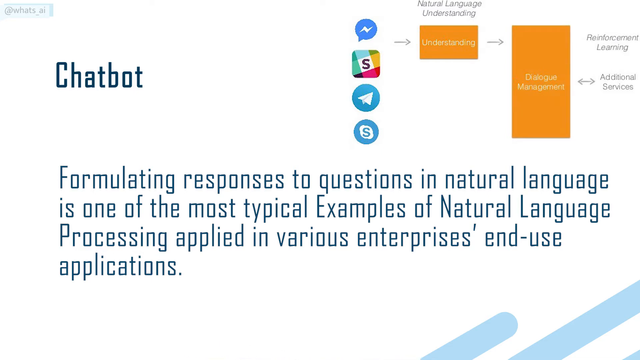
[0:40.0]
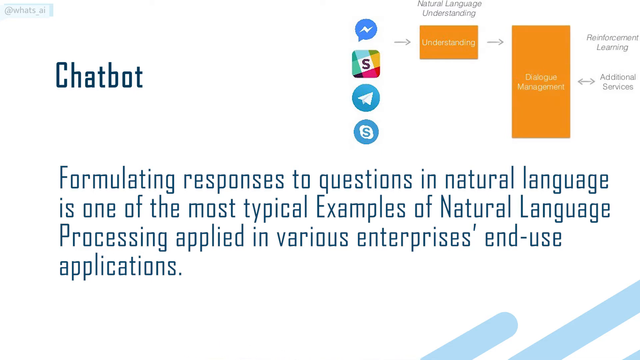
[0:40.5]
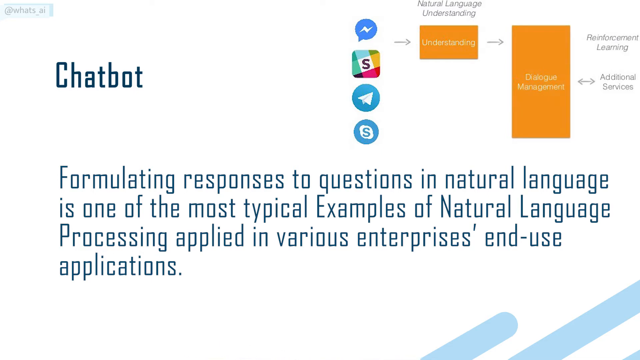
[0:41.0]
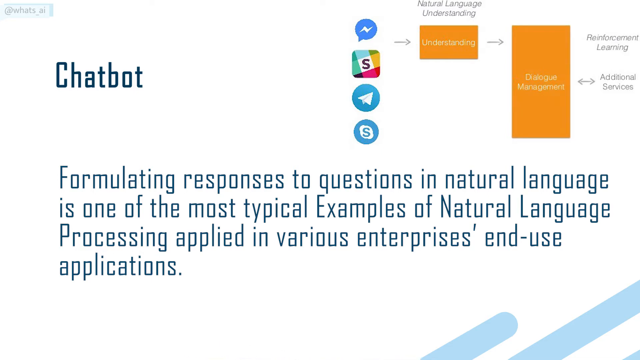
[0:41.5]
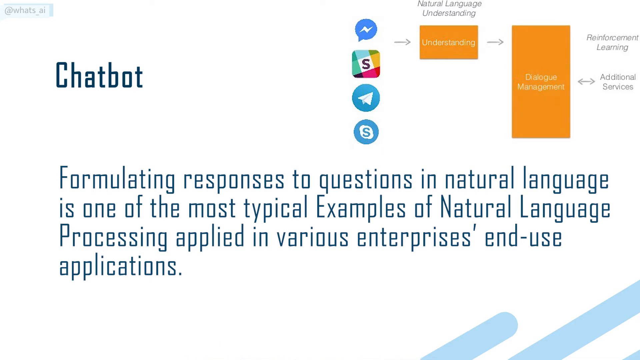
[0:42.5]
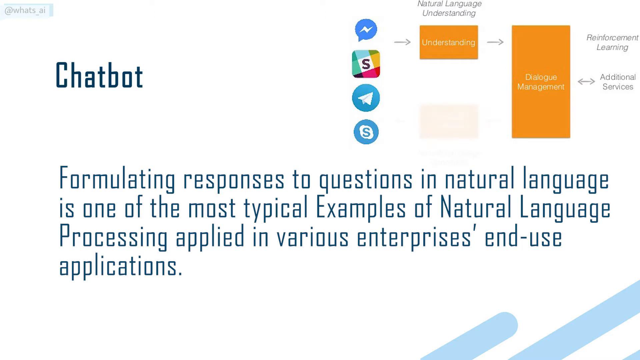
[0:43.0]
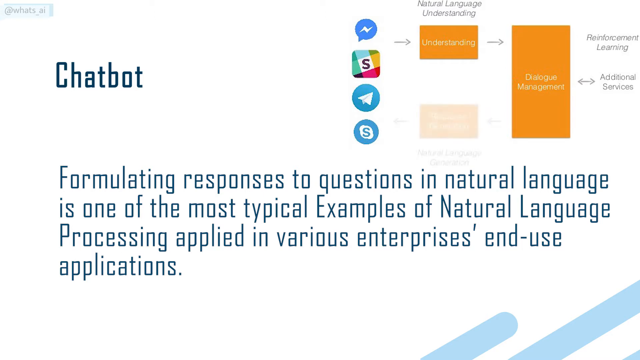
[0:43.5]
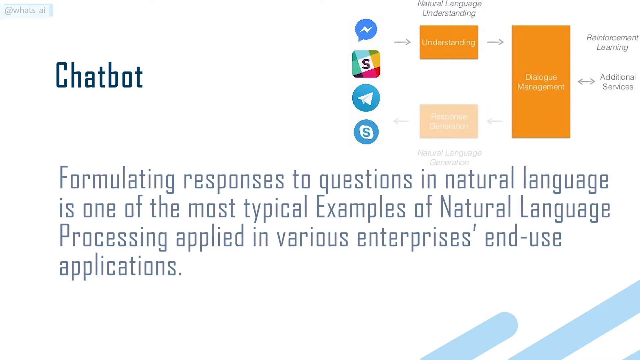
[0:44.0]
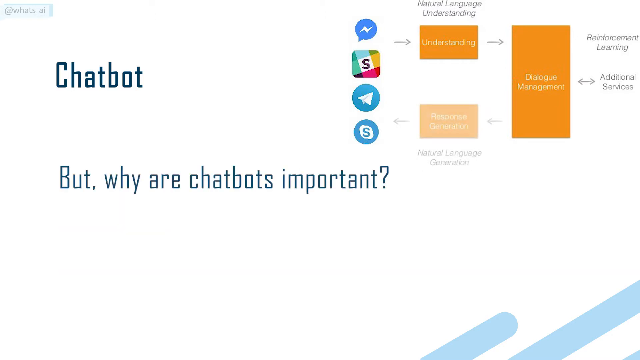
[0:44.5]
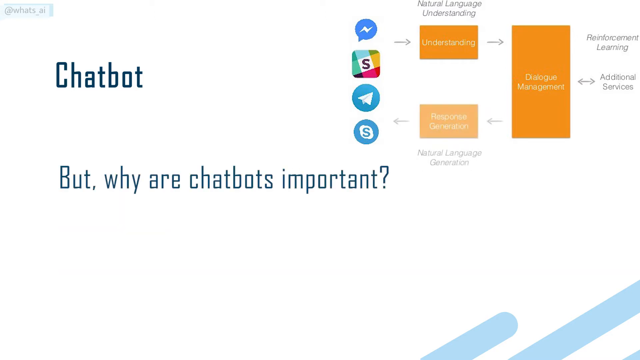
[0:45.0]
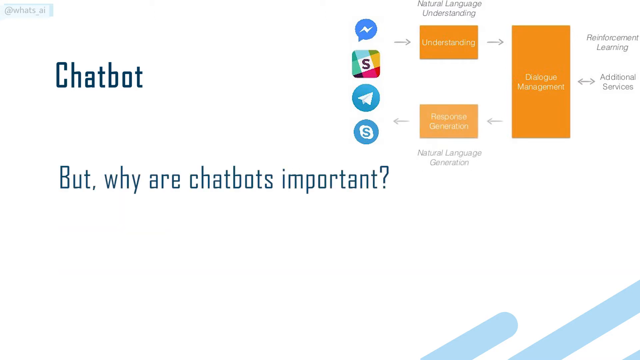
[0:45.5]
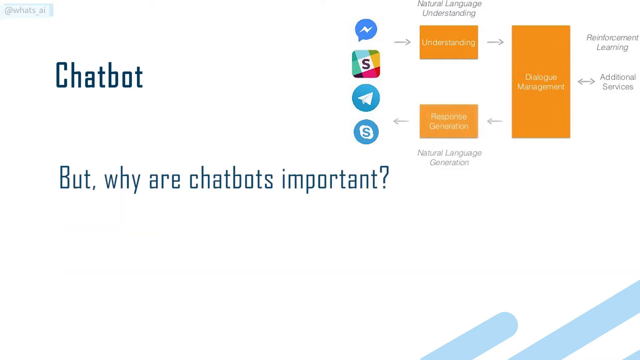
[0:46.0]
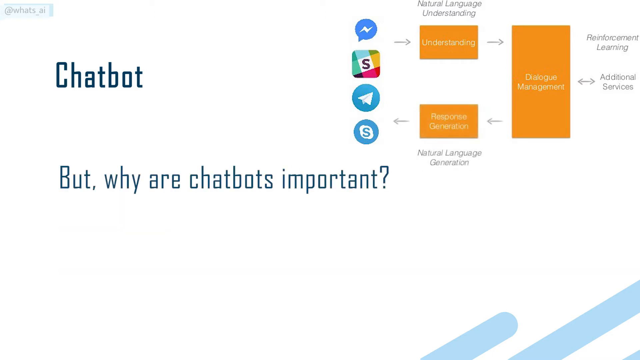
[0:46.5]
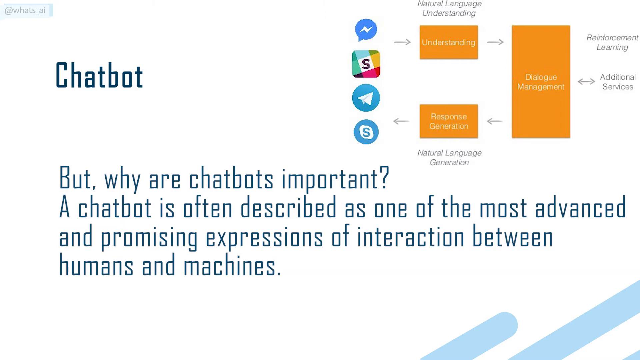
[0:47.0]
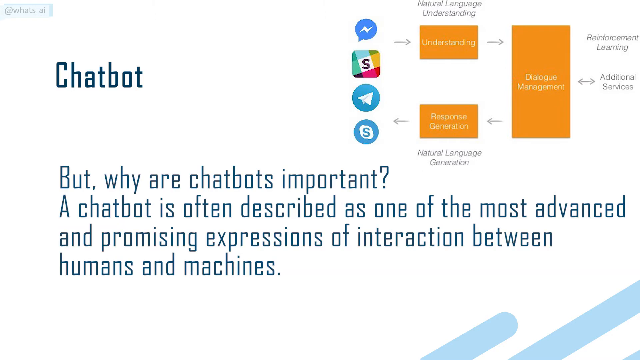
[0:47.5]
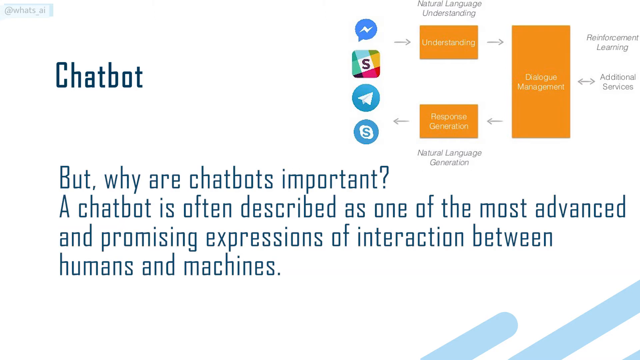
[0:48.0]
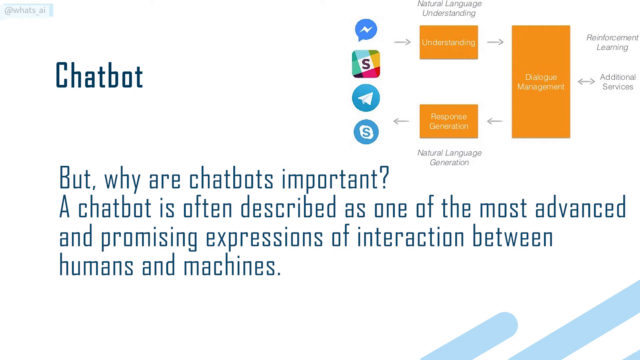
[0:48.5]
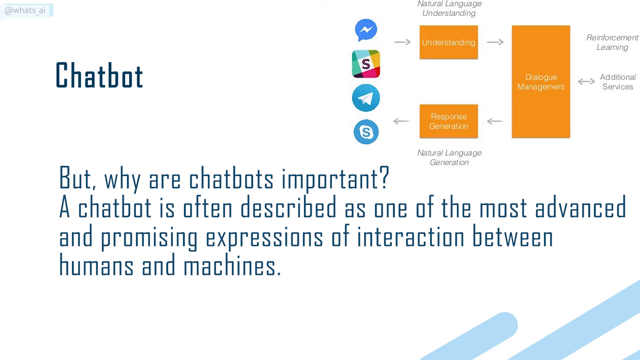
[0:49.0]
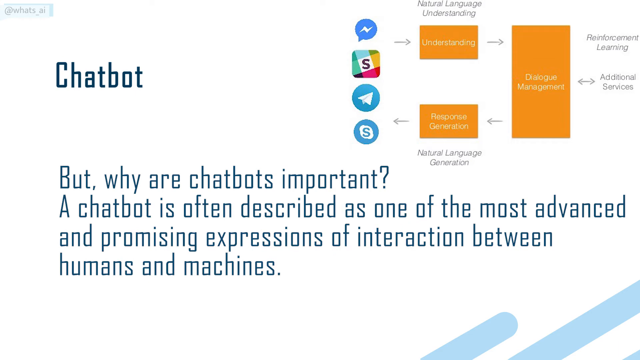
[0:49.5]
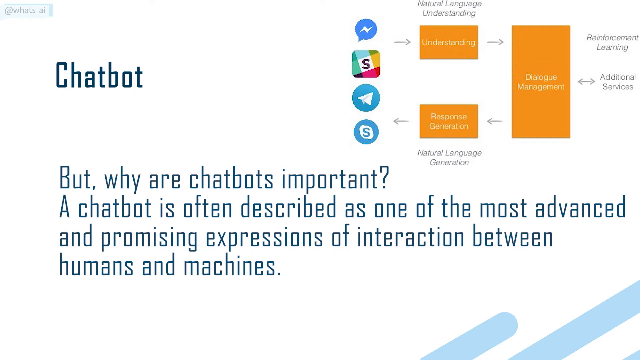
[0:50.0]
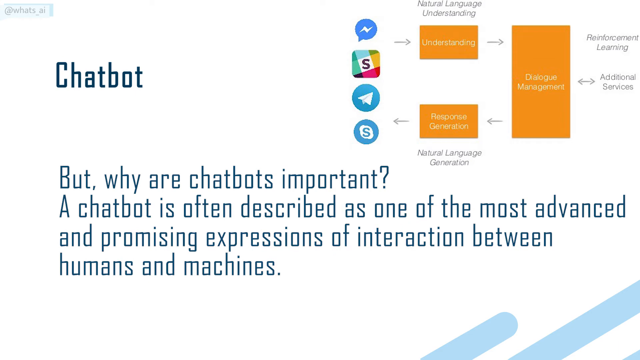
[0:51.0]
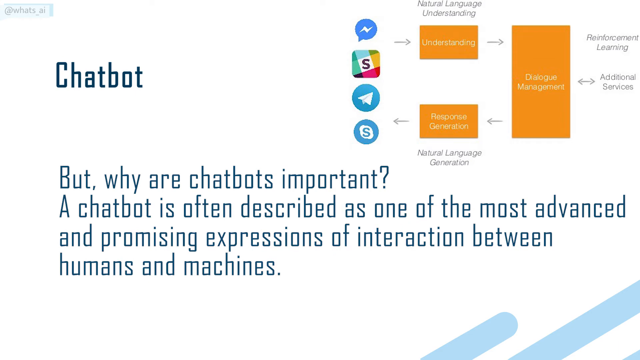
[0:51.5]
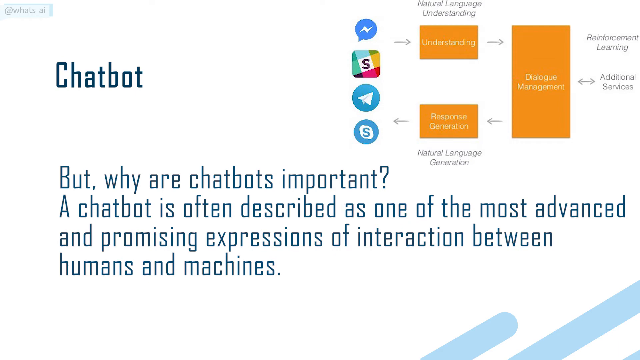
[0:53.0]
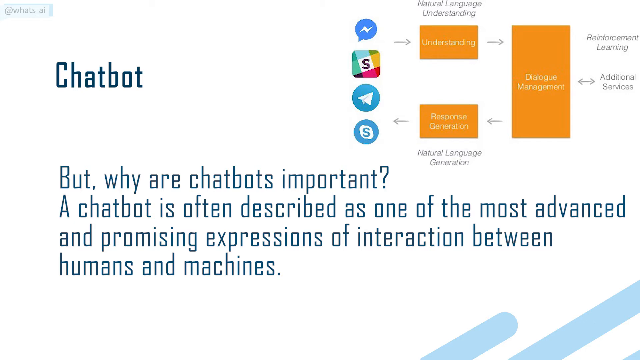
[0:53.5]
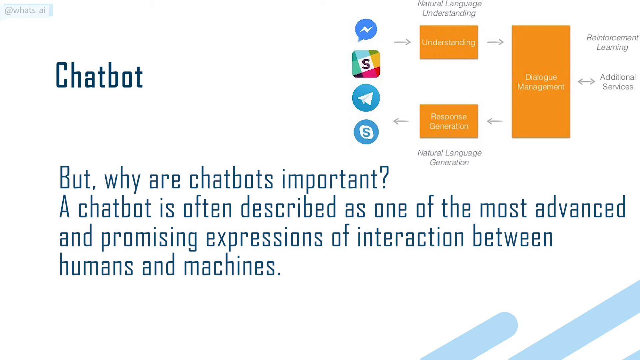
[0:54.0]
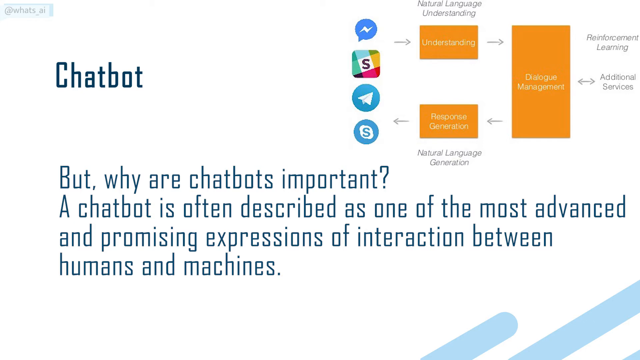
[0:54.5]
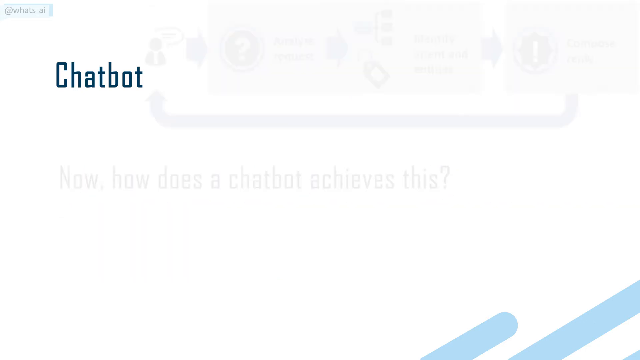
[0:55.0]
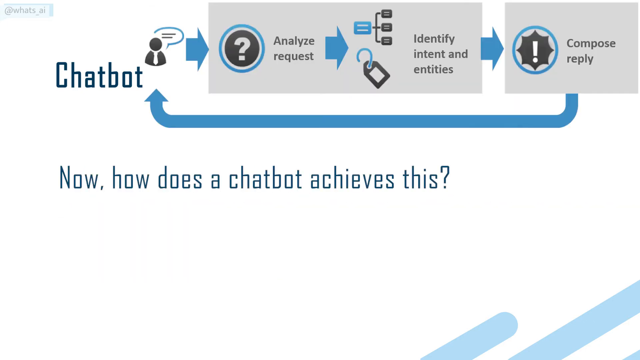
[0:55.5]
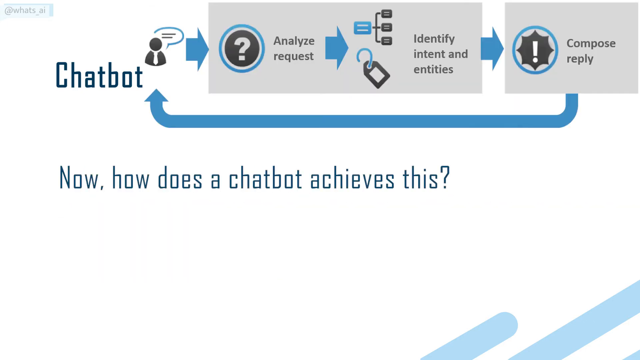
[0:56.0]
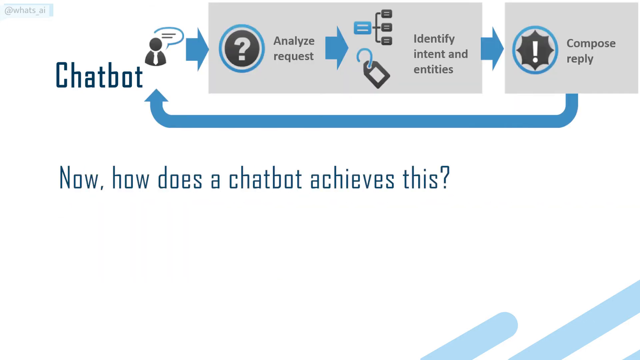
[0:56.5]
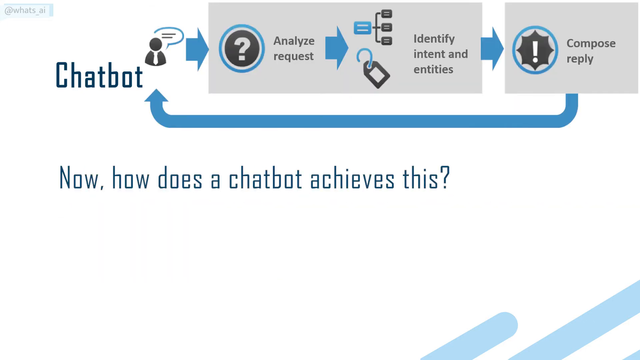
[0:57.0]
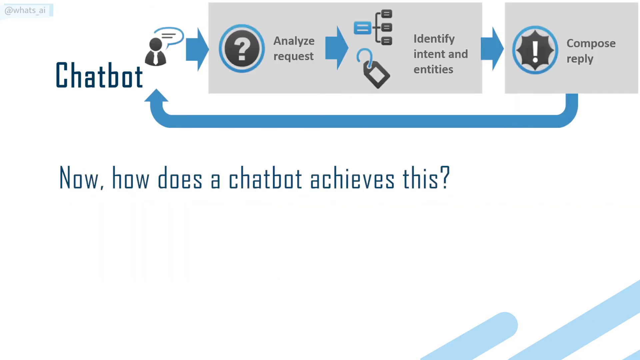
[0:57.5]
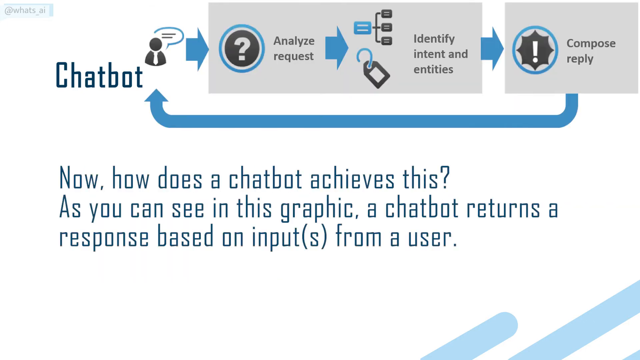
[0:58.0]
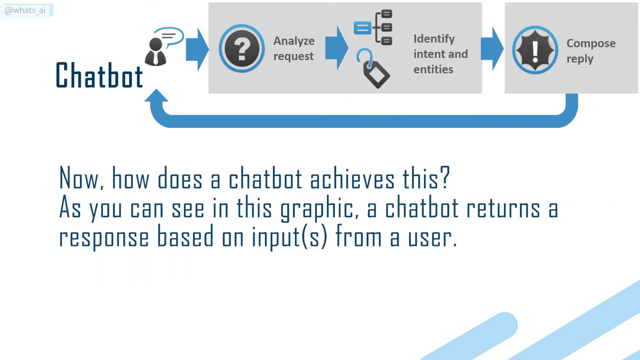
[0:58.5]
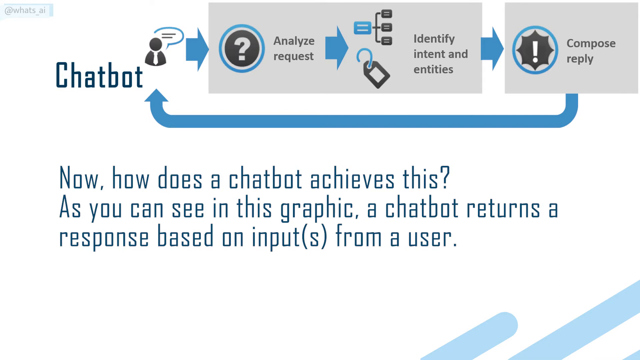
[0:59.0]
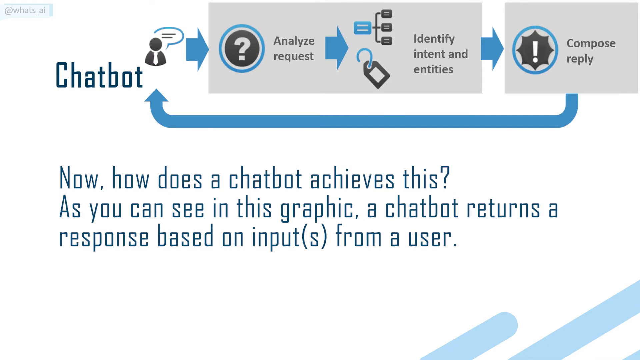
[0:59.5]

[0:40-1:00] Words about chatbots are put up in paragraphs and change as the video progresses. The text asks "but why are chatbots important?" and the answer appears: "a chatbot is often described as one of the most advanced and promising expressions of interaction between humans and machines." Those words are taken down, and a diagram at the top shows a person's silhouette pointing to a question, which points to "analyze request," which points to "compose reply"; the diagram also has "identify intent and entities." The text reads "now how does a chatbot achieve this?" and then "as you can see in this graphic, a chatbot returns a response based on inputs from a user." Then text begins "formatting responses to questions in natural language is one of the most."